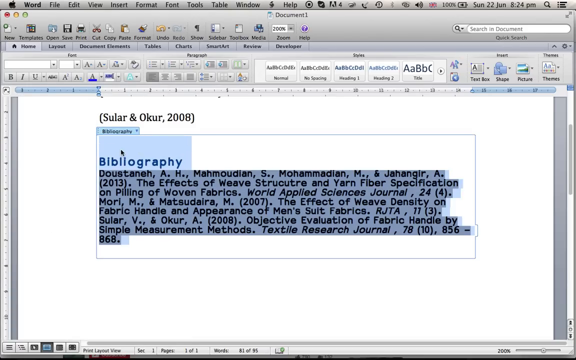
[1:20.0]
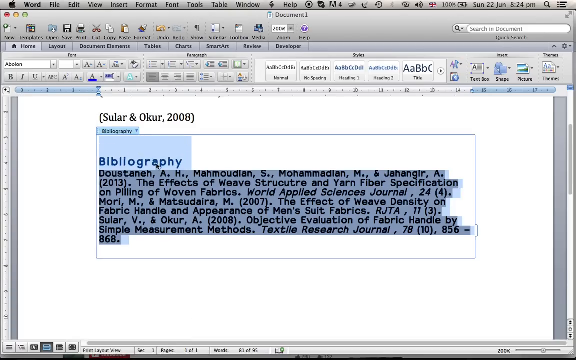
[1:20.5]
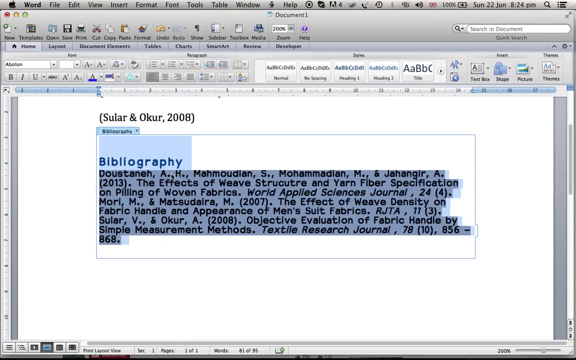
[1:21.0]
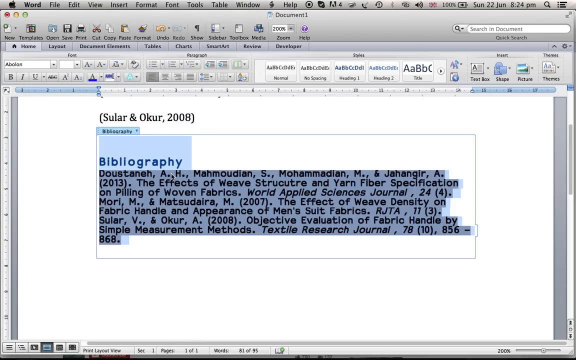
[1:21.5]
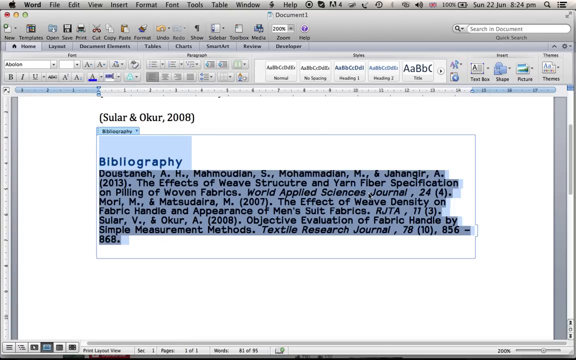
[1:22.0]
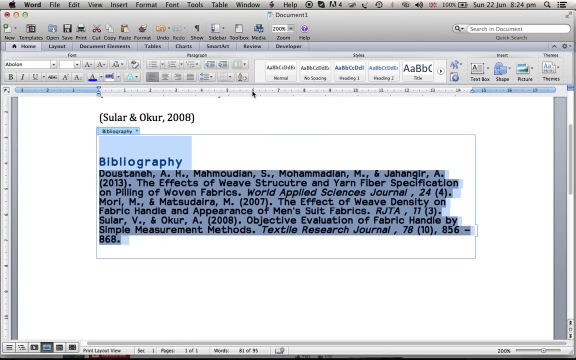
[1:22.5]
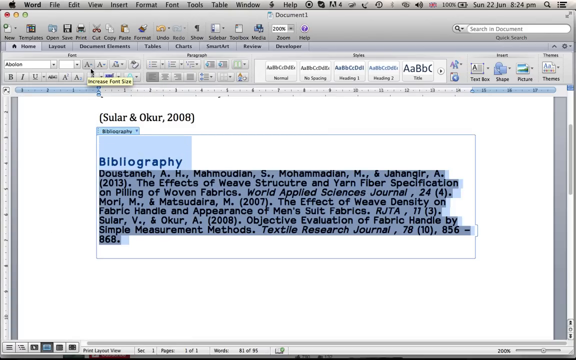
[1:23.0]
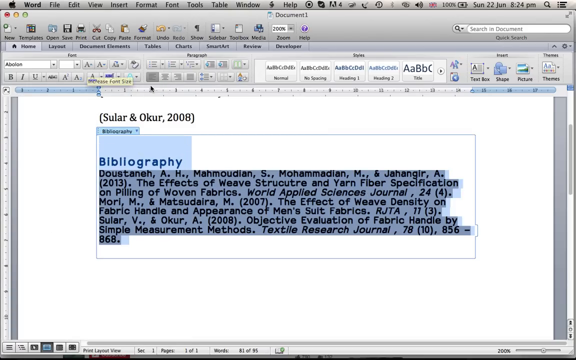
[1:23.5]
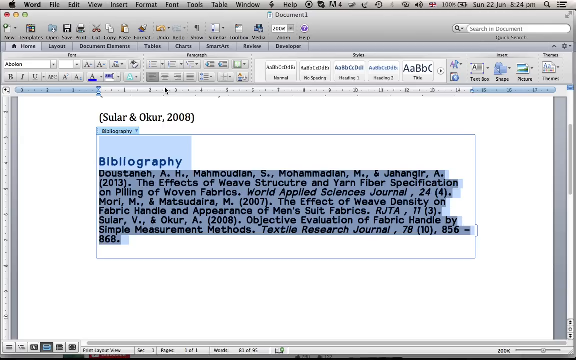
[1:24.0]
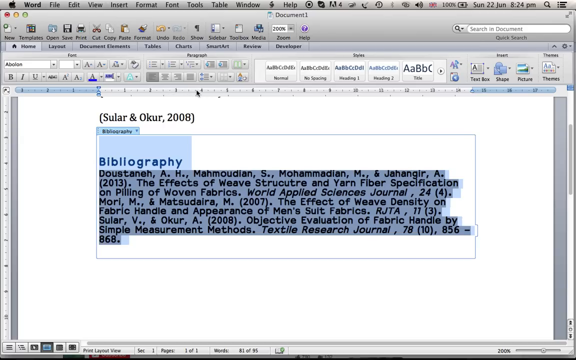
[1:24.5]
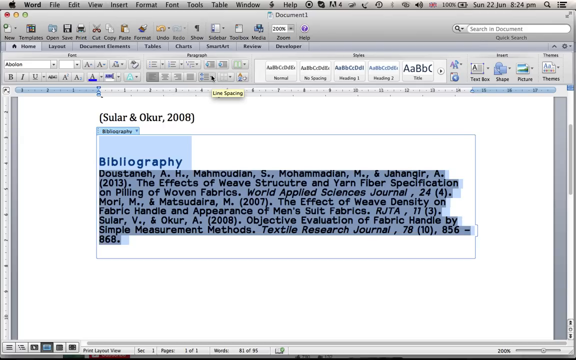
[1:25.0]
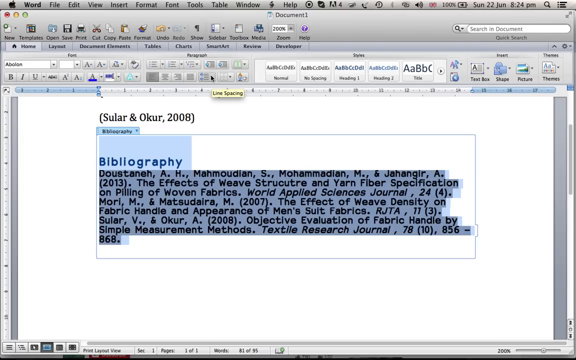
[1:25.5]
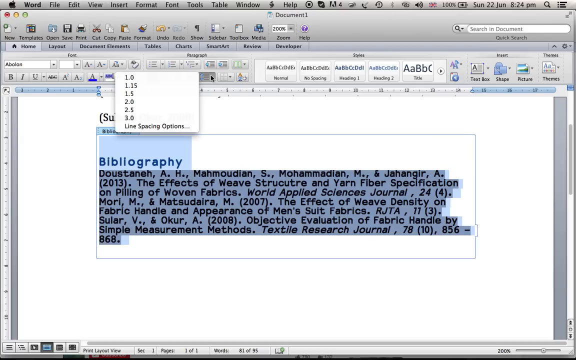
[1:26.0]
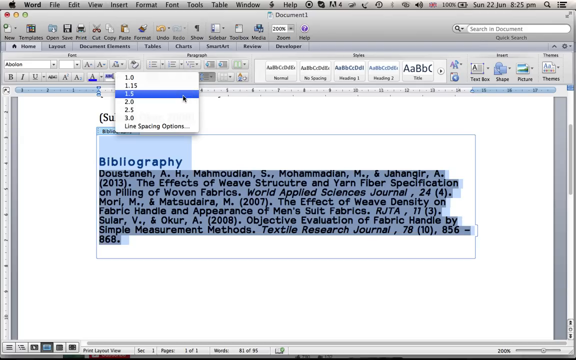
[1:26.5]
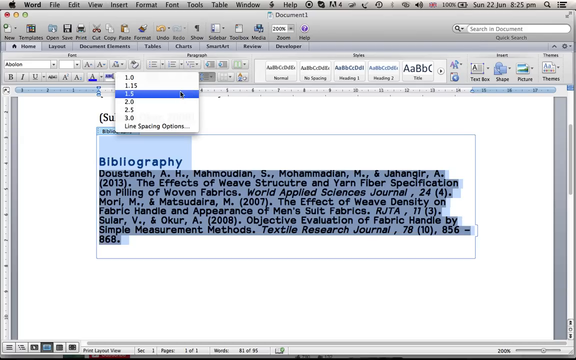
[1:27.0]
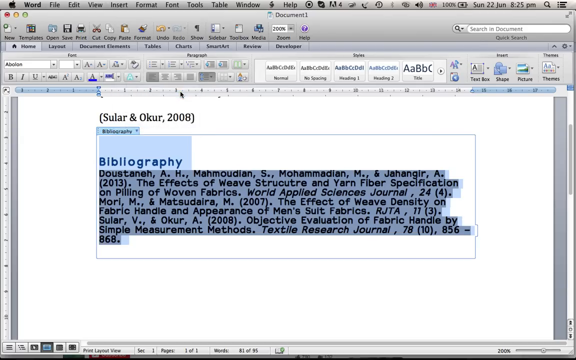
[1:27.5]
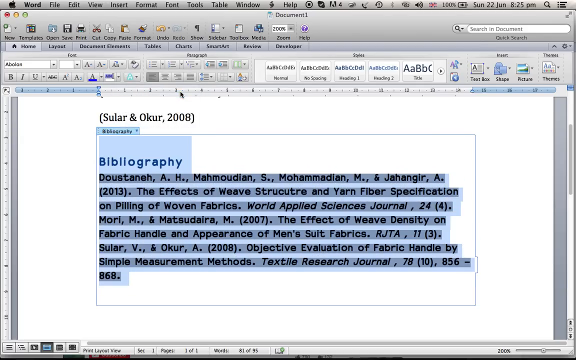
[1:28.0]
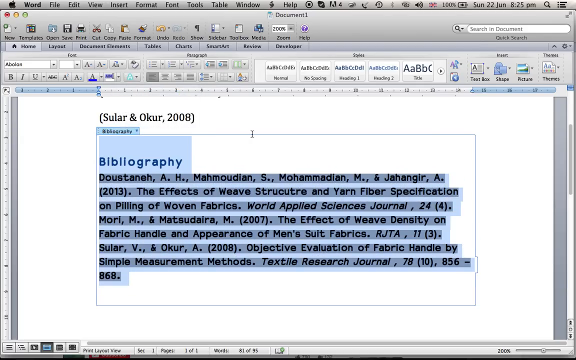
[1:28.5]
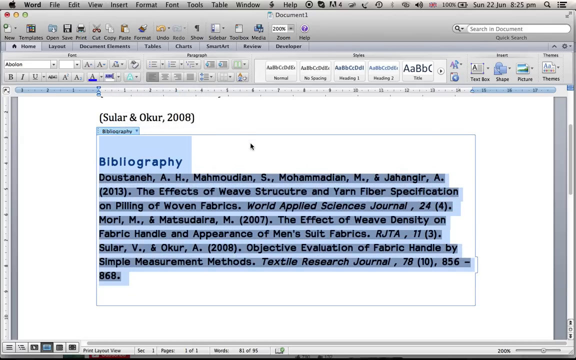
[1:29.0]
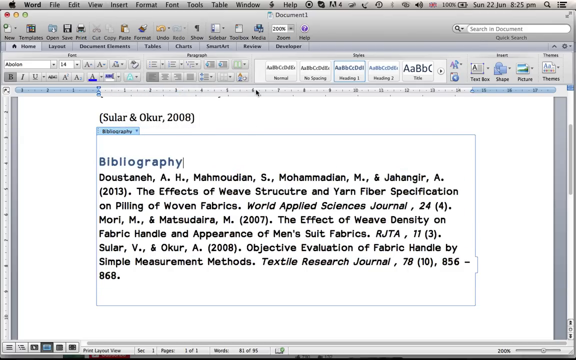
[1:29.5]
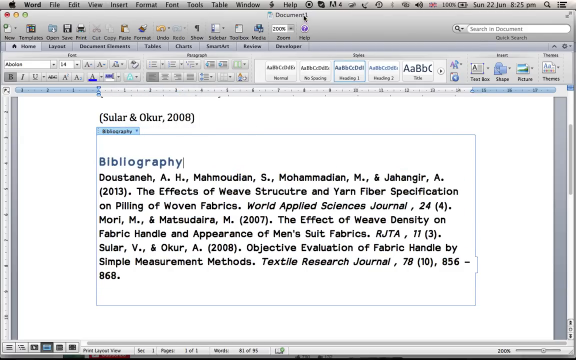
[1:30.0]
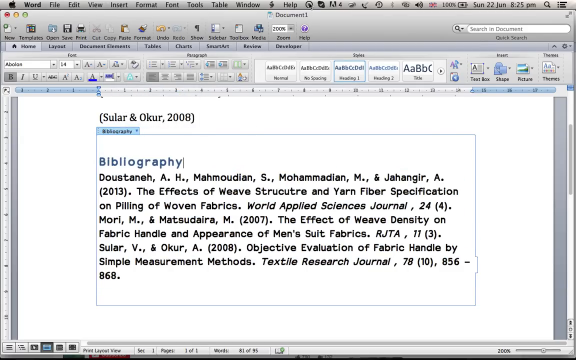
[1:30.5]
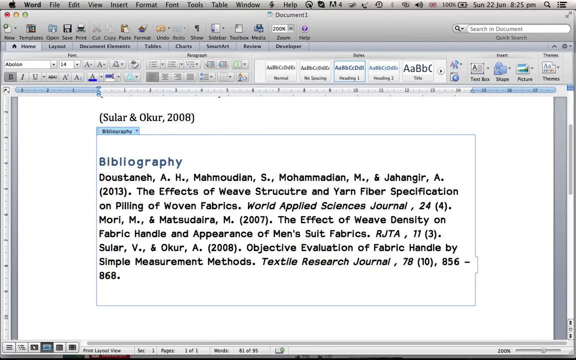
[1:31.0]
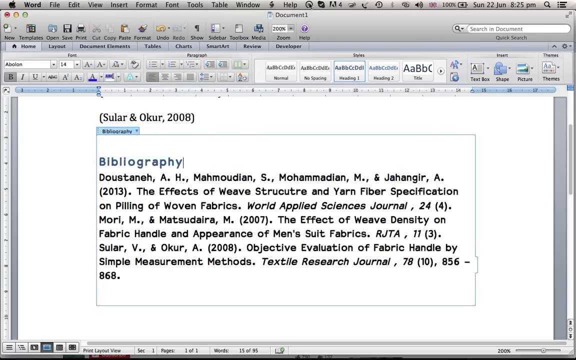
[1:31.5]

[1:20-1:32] After changing the font, the person makes it bold, then moves the cursor to line spacing and changes it to 1.5 line spacing. The bibliography is not numbered; the entries are just written, separated by full stops.